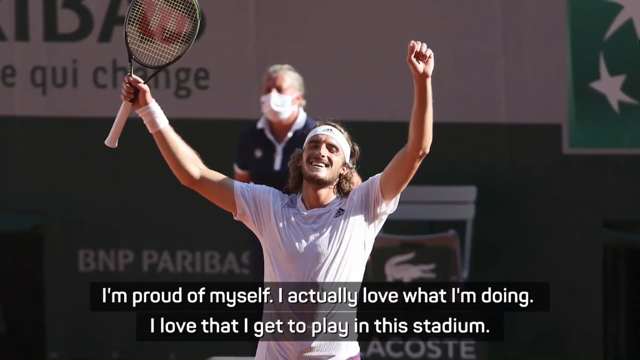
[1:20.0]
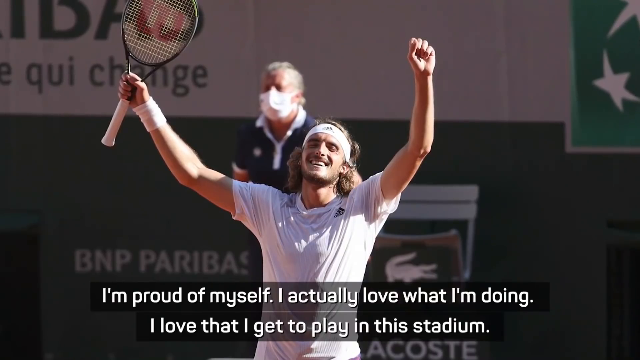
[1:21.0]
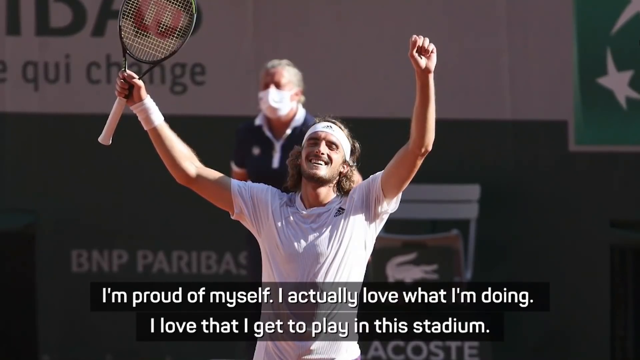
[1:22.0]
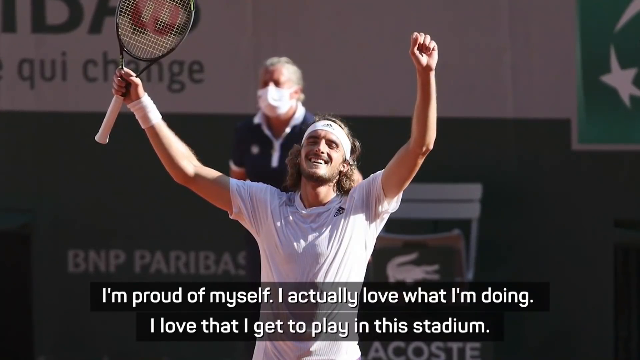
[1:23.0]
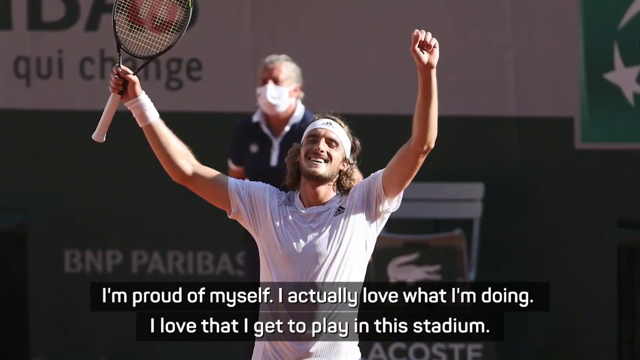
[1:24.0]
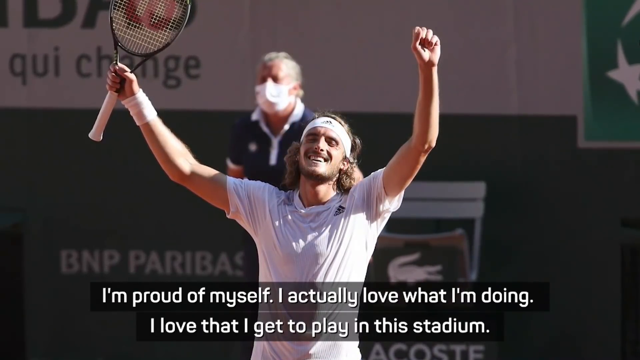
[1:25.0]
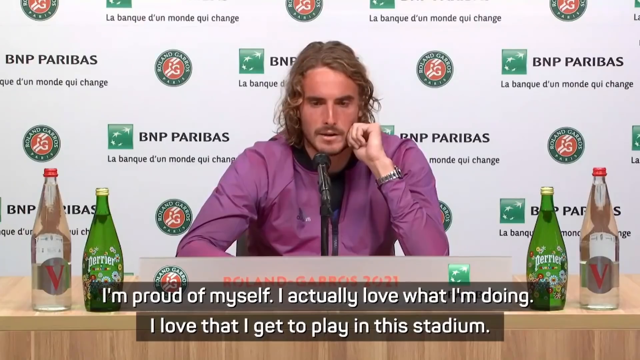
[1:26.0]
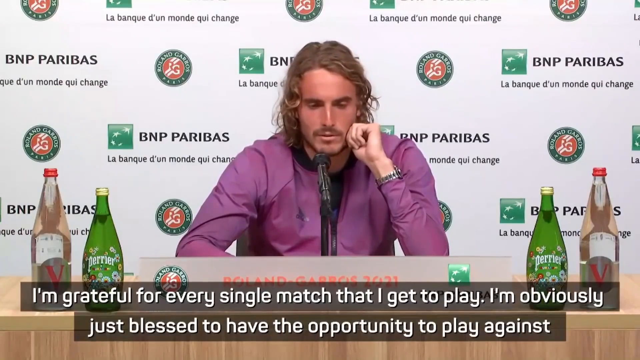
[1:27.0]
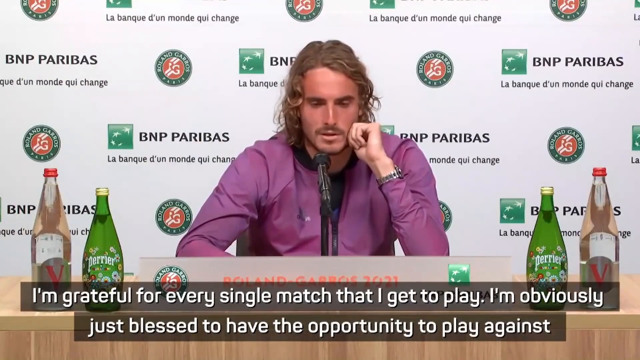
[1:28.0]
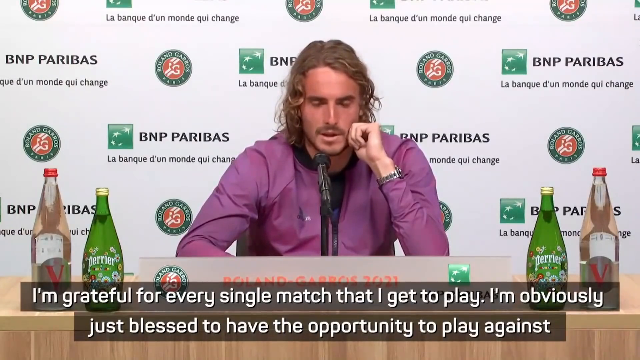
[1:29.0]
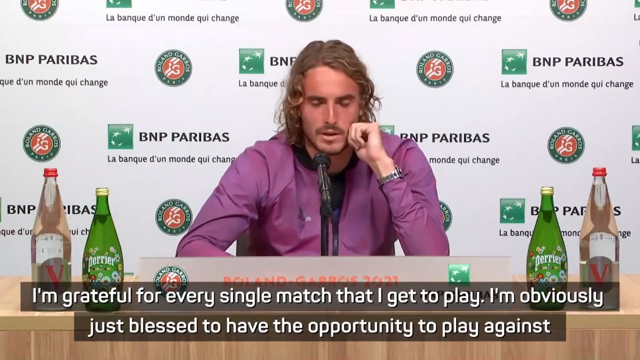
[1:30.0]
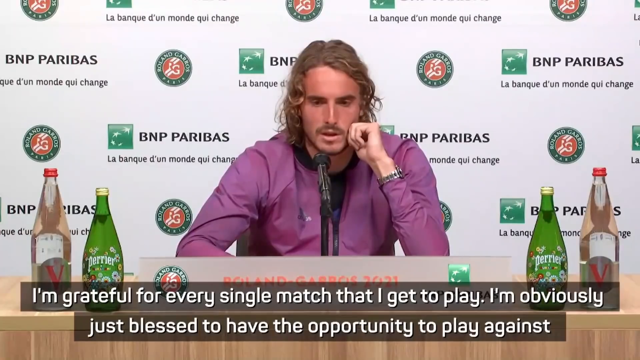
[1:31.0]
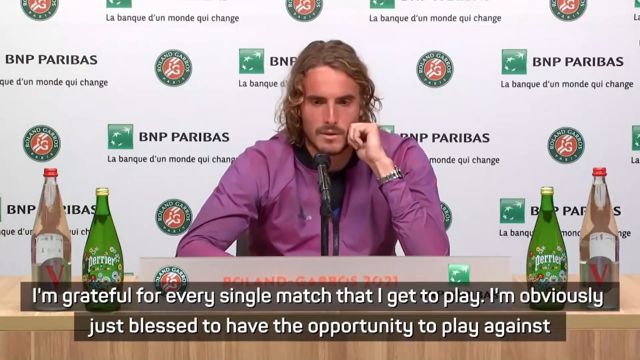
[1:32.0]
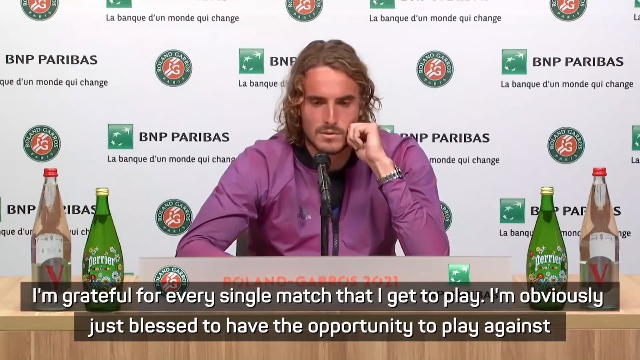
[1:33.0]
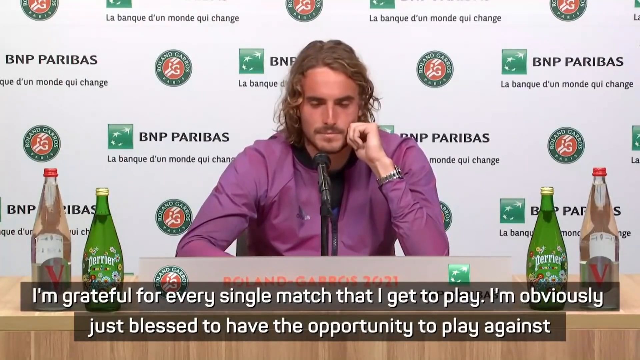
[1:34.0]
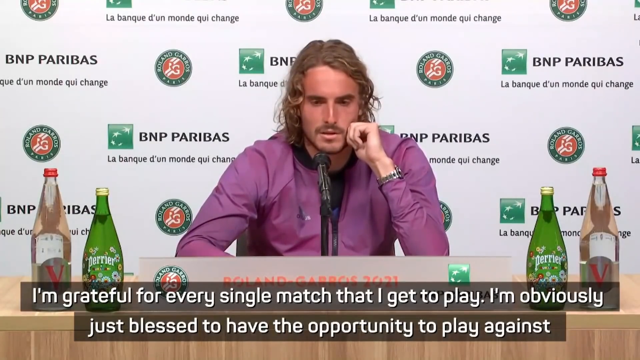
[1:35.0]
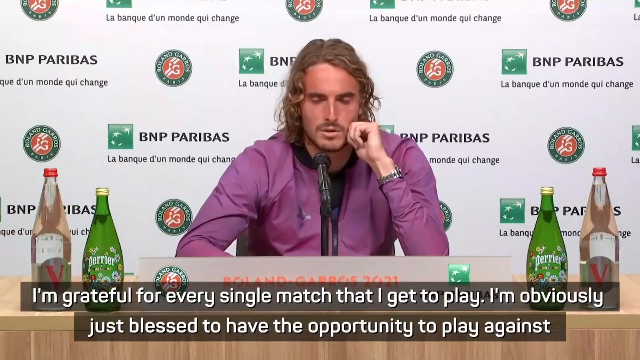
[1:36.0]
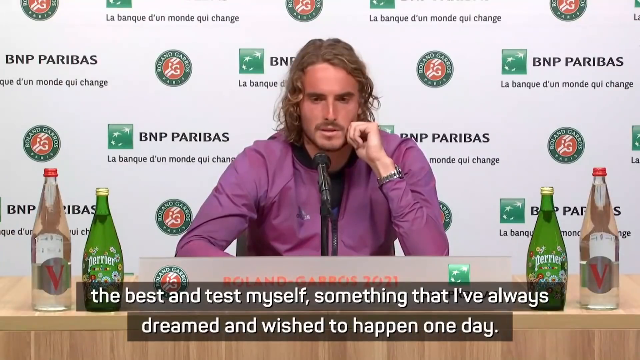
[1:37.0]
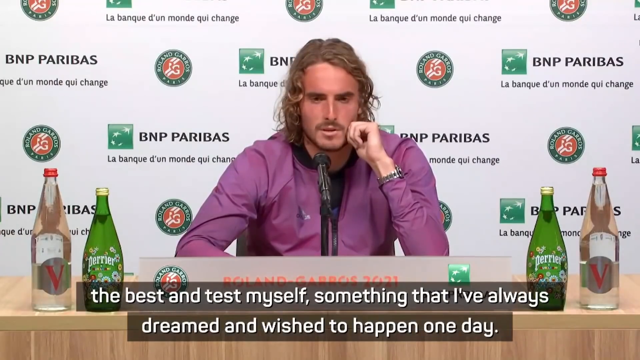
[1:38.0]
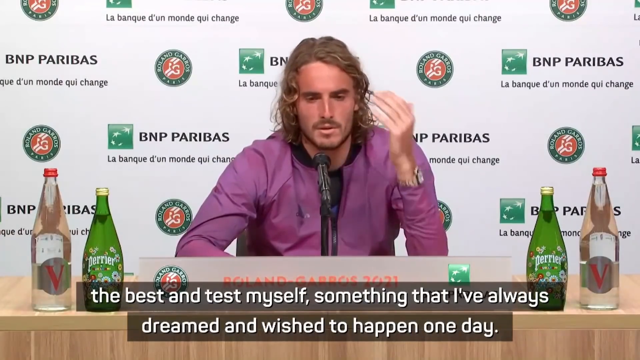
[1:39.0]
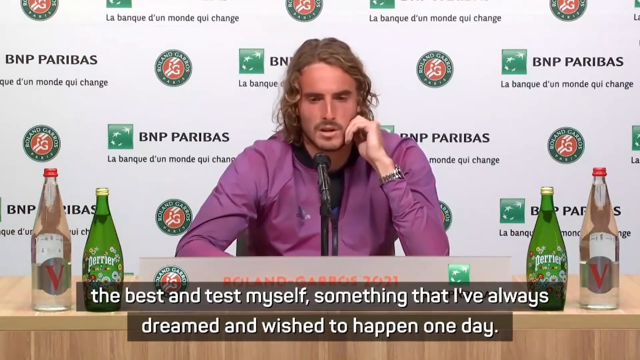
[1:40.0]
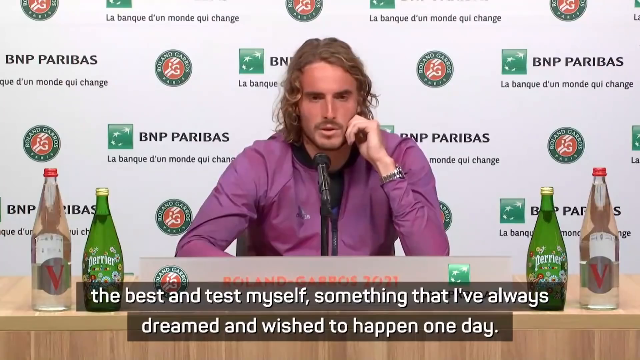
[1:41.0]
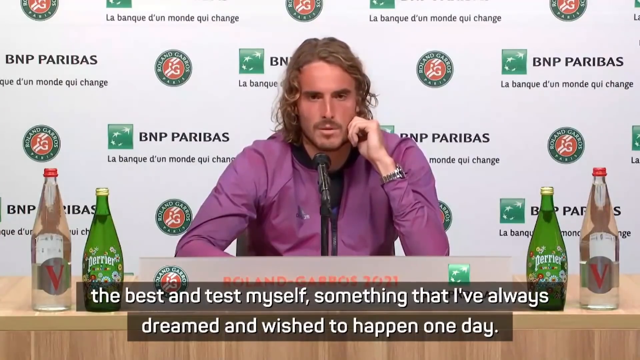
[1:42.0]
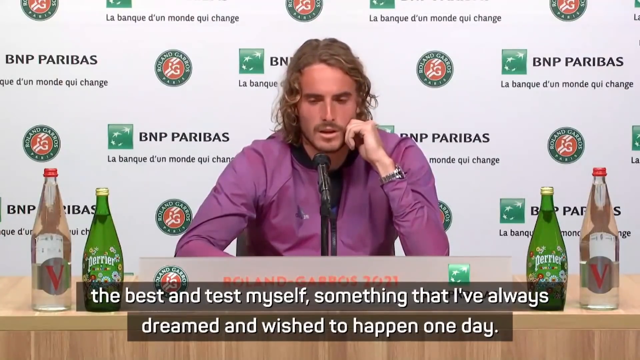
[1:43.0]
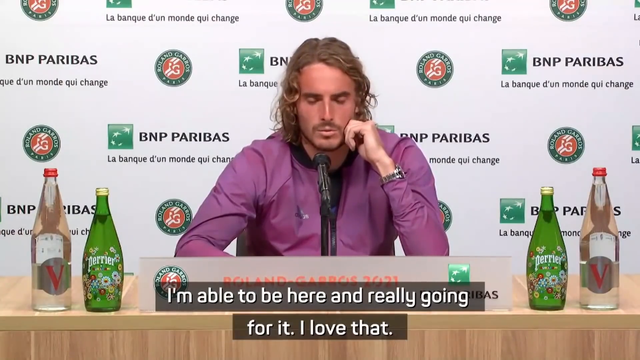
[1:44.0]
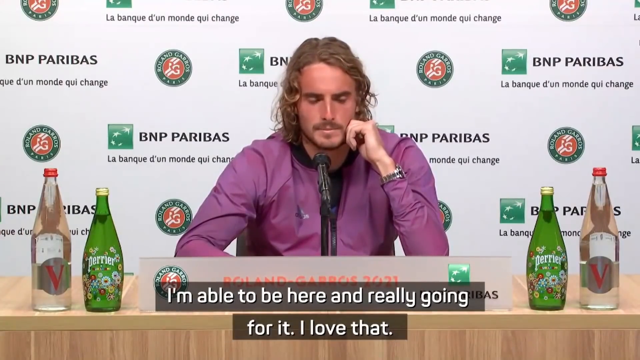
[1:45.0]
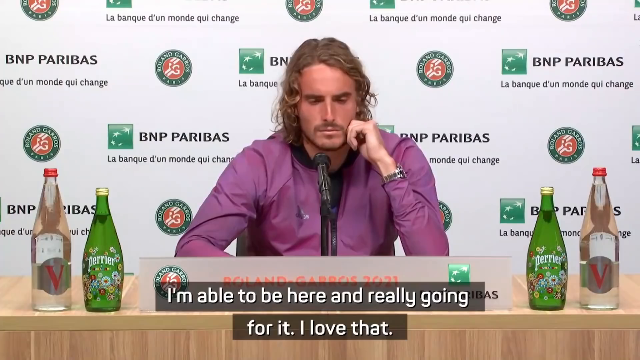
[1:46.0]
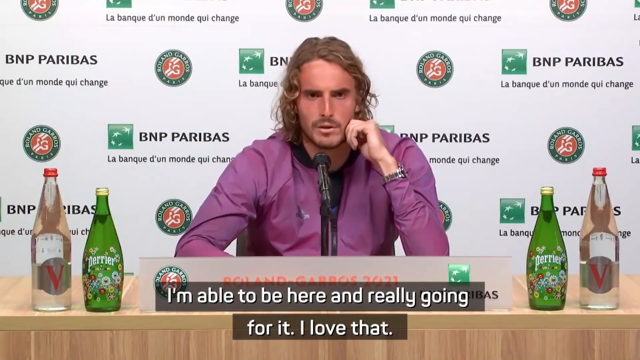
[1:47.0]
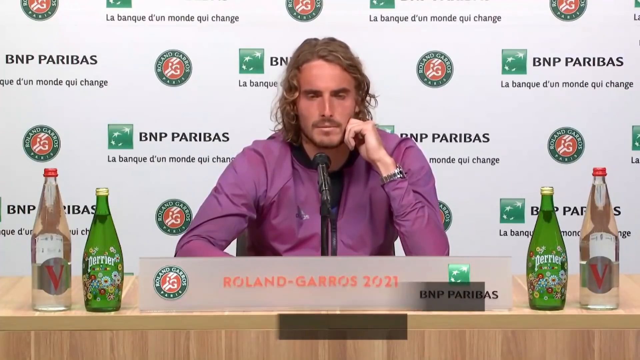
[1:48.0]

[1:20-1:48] The still image shows the player celebrating with his arms in the air, holding the racket in his right arm, with a big smile on his face. Then the man from that picture is shown at the wooden table giving his interview, wearing the purple shirt. His right arm is bent and resting on the table, and his left arm is bent at the elbow, with his hand making almost a fist against the left side of his face. He has sort of wavy, dirty blonde hair and a mustache. He appears very calm and neutral despite having won, and does not seem too happy. He appears to be talking to someone directly in front of him, looking at them as he speaks.